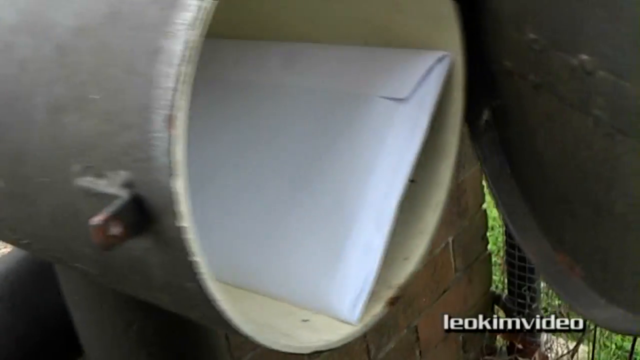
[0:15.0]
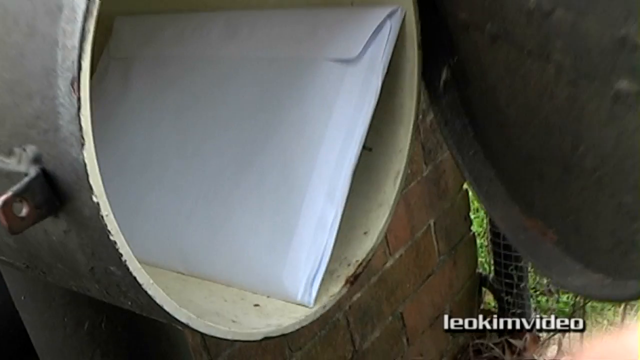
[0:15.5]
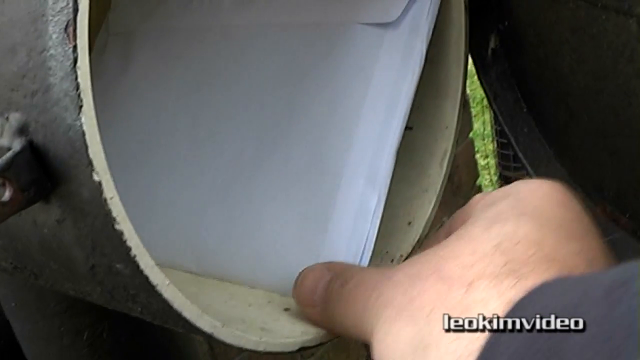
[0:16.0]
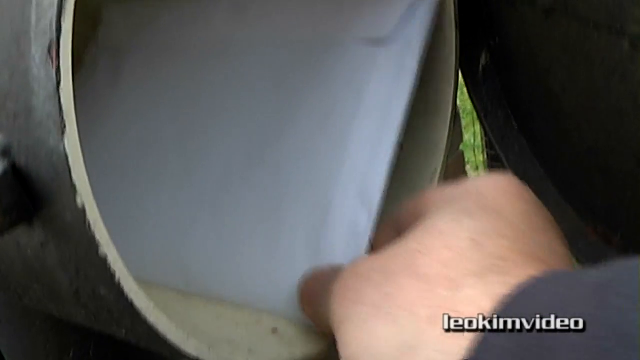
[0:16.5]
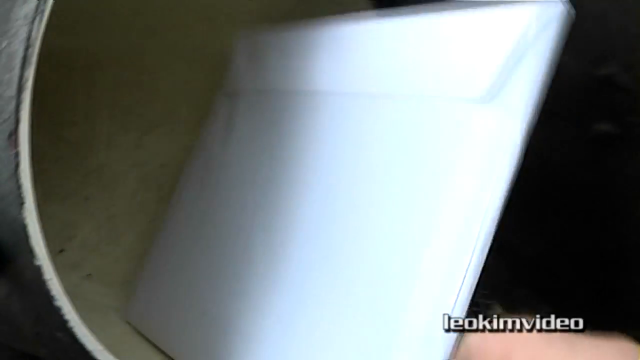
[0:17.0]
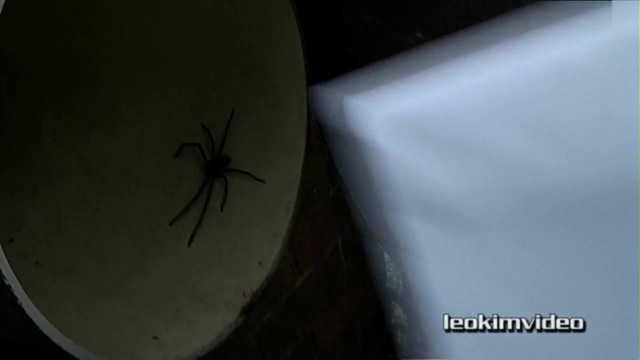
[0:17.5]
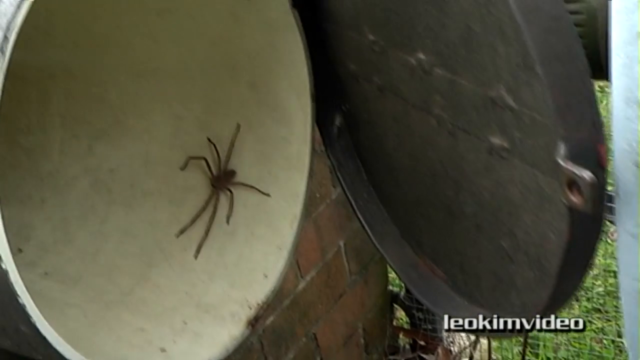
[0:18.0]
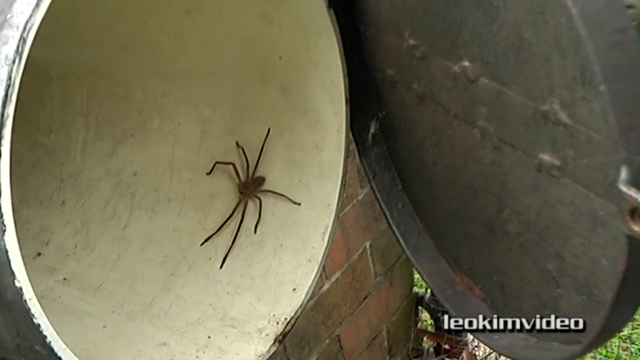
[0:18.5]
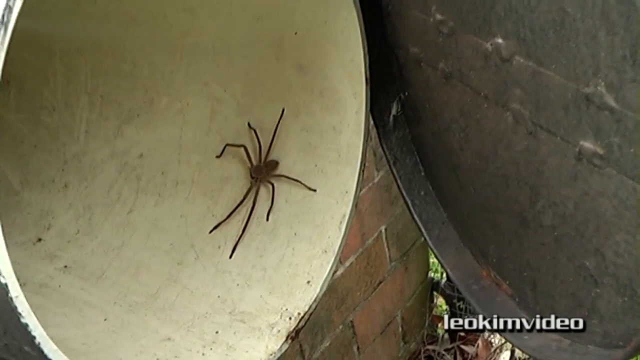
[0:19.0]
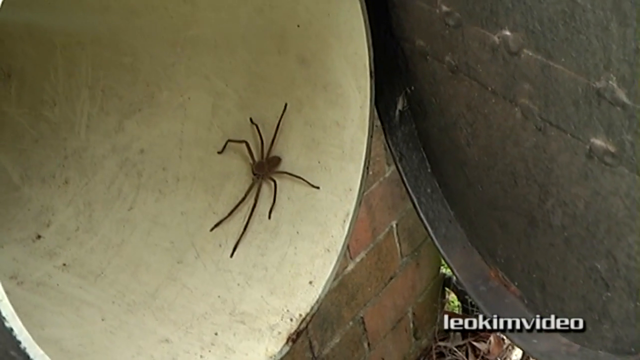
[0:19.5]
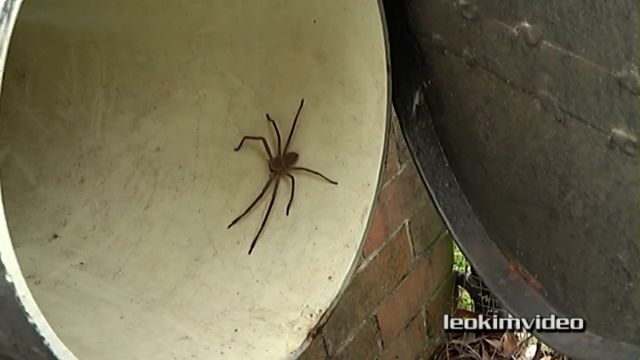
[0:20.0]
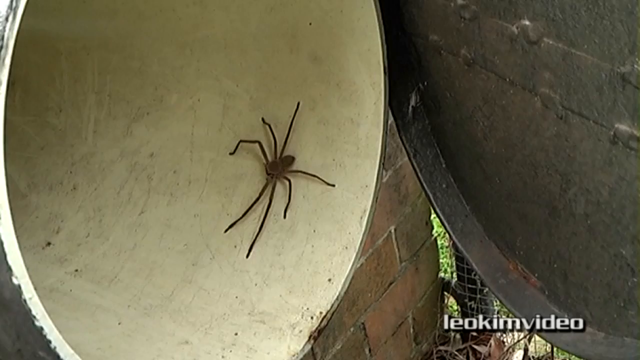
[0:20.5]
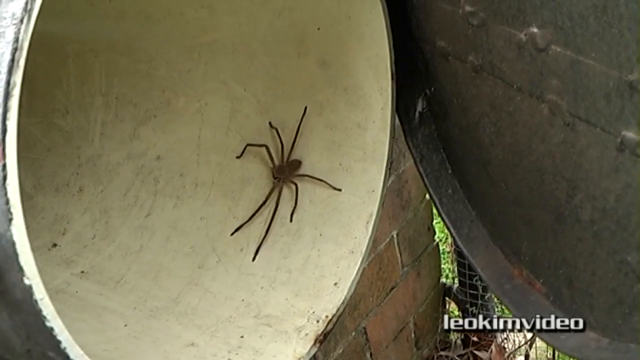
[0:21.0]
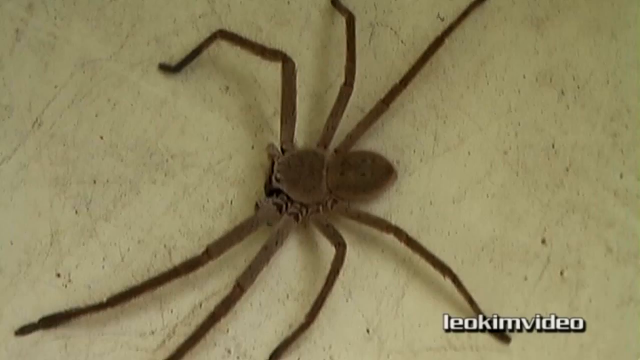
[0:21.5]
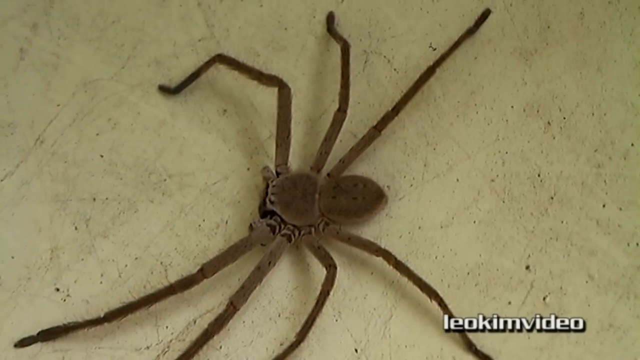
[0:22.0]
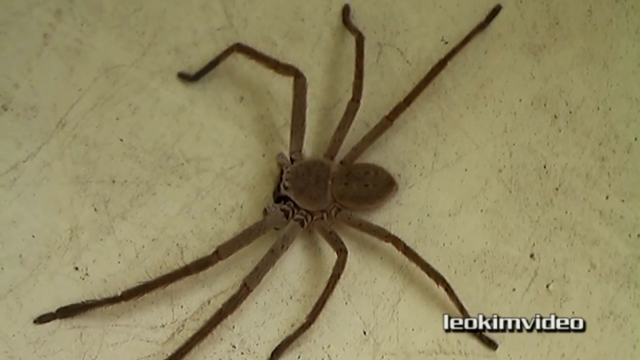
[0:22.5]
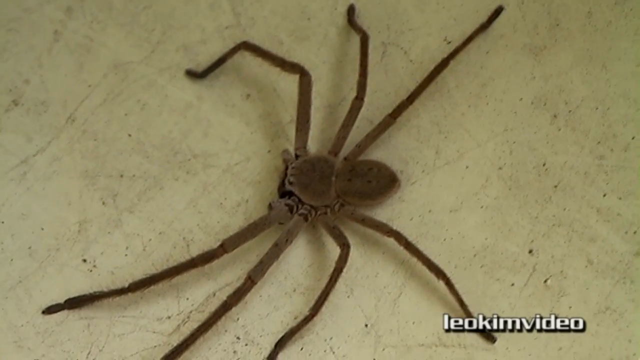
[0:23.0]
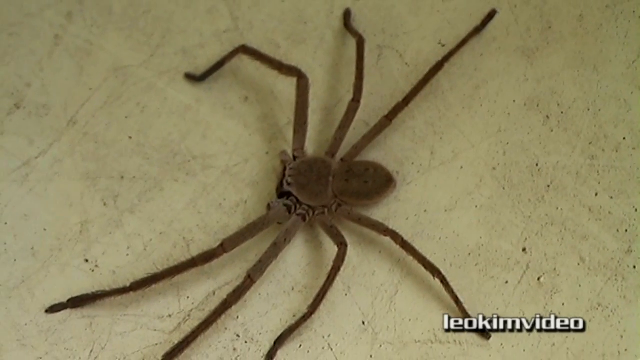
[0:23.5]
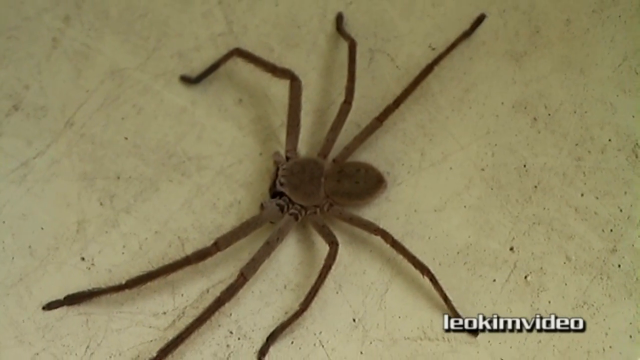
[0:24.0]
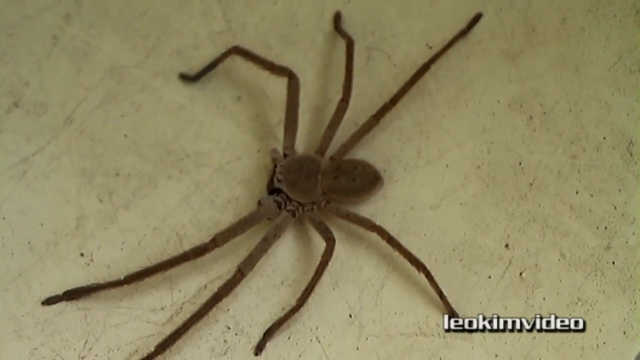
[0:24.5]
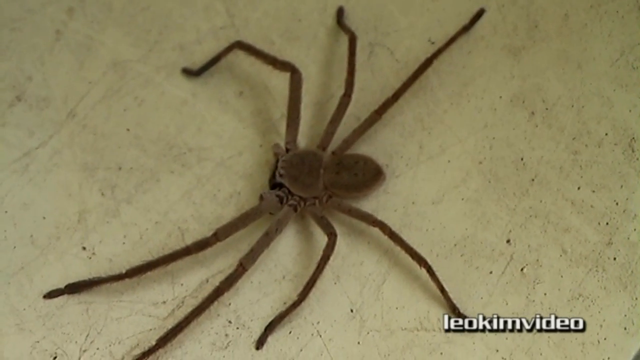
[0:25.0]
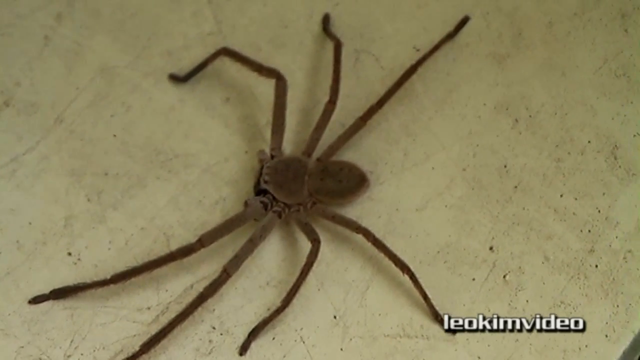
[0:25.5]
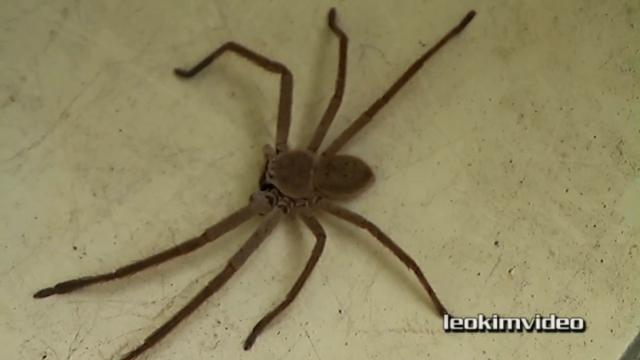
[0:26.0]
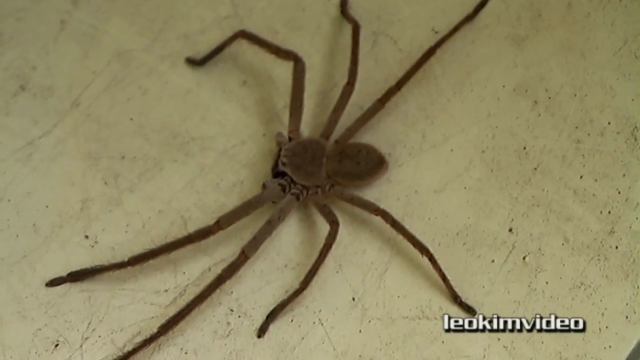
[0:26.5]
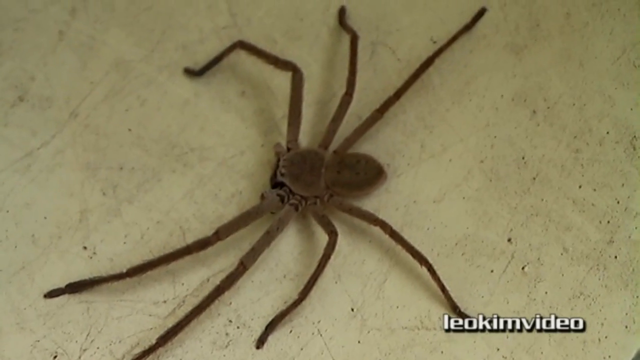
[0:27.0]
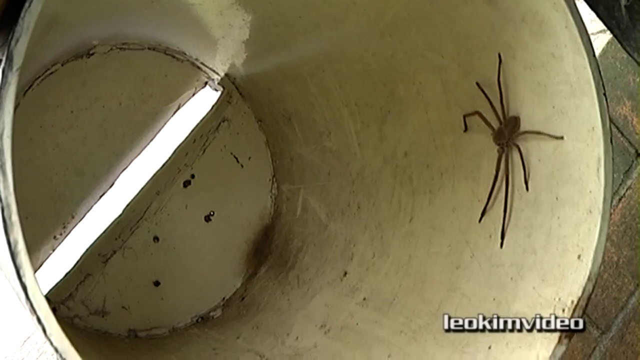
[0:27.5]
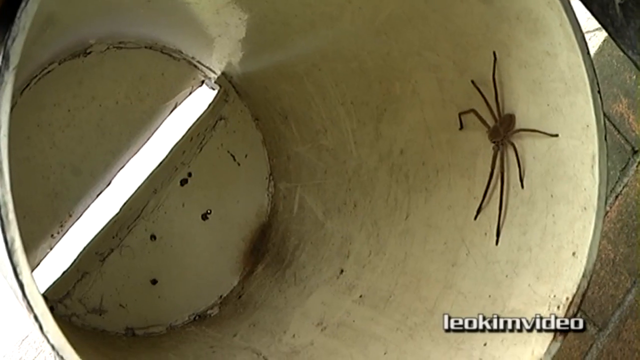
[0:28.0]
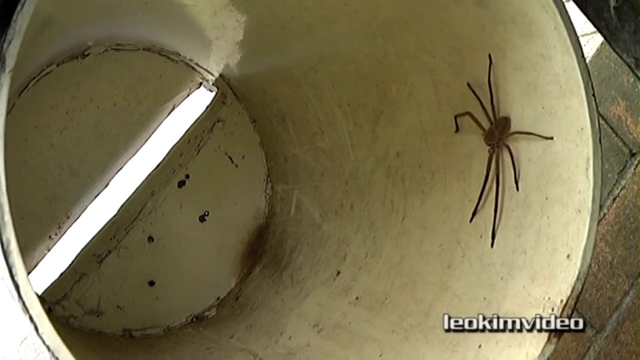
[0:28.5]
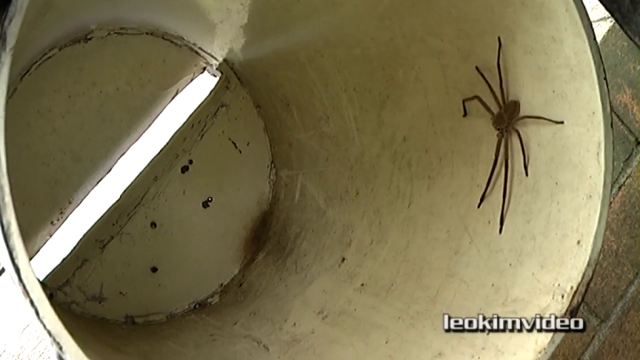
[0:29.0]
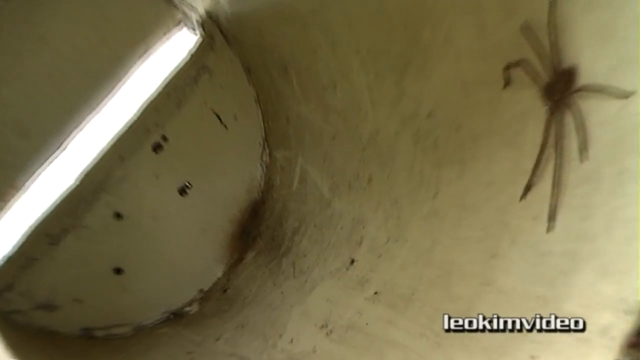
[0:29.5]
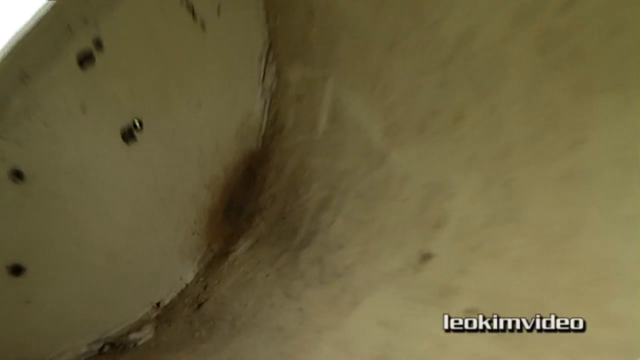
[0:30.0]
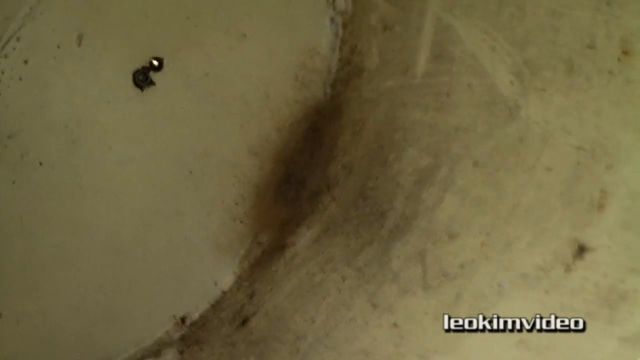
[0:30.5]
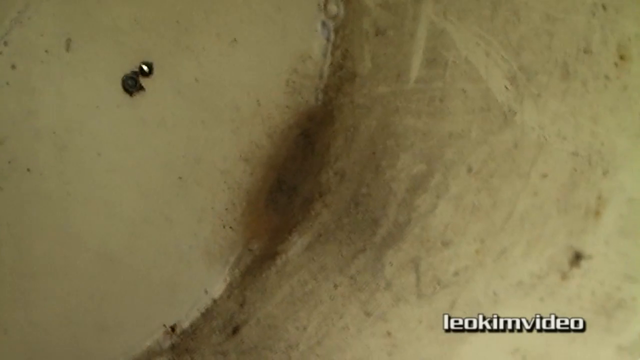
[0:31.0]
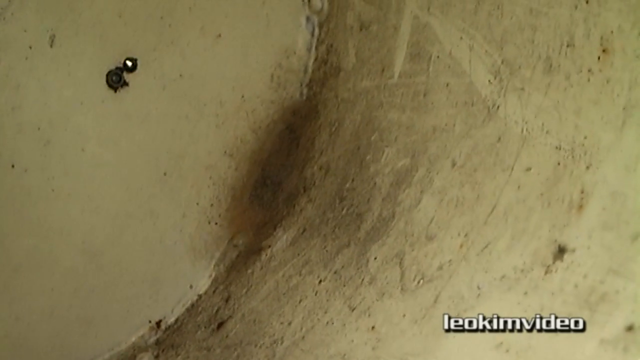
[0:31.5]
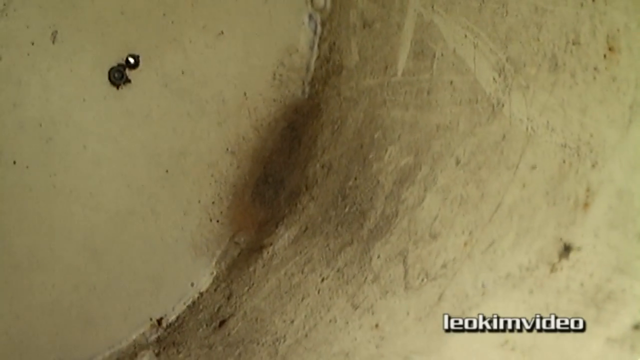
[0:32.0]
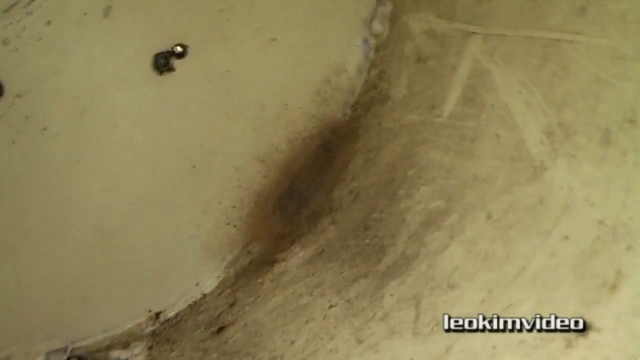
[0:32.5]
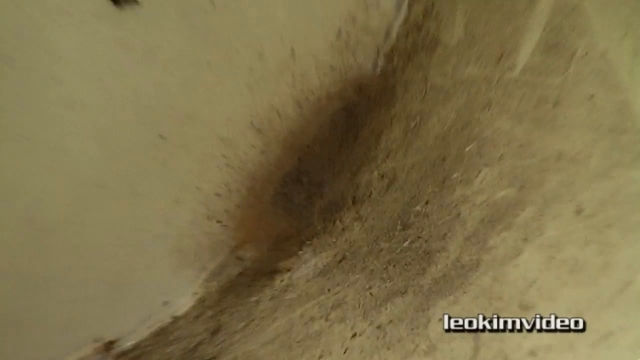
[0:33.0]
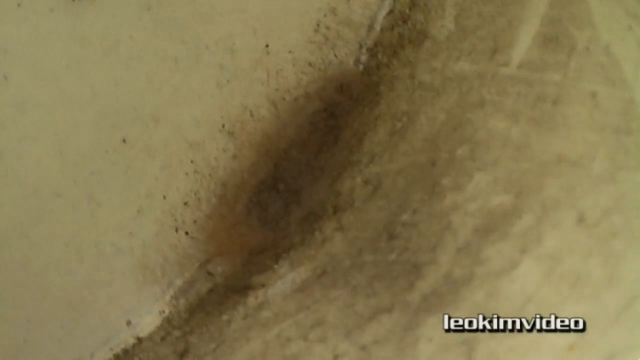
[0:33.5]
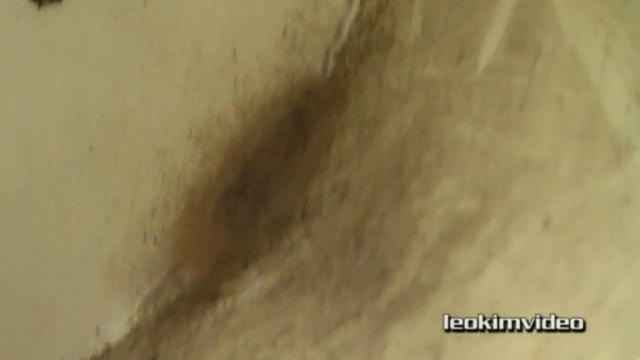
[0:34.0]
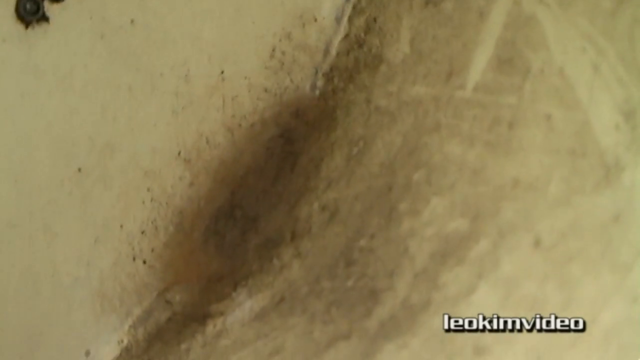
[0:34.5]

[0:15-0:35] The man pulls the piece of mail out of the mailbox, revealing a great big spider about the size of a hand that was underneath the mail. It has six very long legs and looks very furry, with a two-part body that is oval in shape. At the very back of the mailbox there is something like a web or a nest, which probably has eggs in it. The mailbox is on a reddish rust-colored brick fence. The spider is not moving. There is something blackish underneath its head, probably another part of its body, though it is difficult to see from this angle. It is a Leo Kim video.